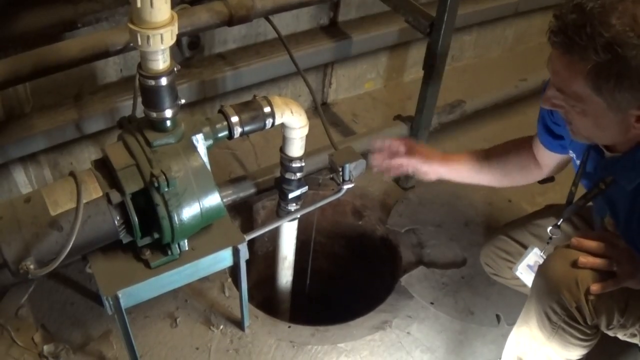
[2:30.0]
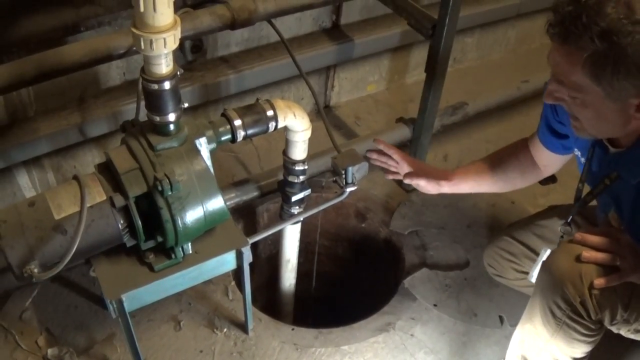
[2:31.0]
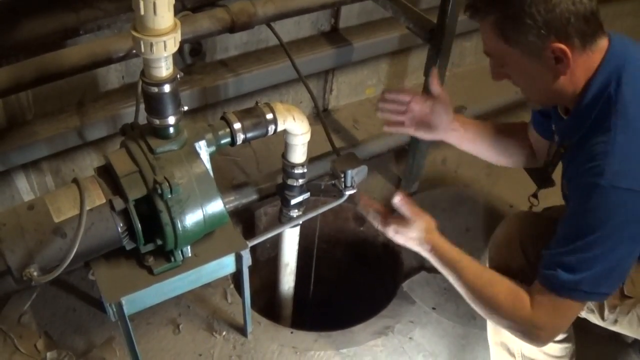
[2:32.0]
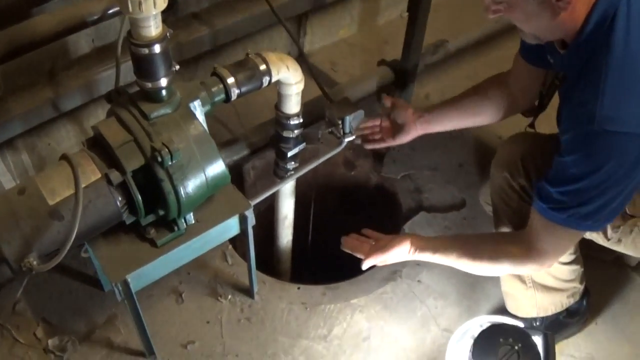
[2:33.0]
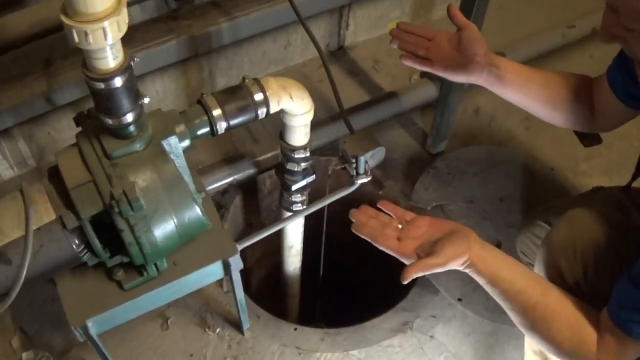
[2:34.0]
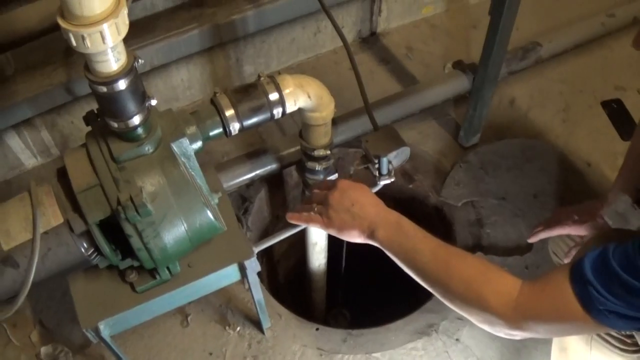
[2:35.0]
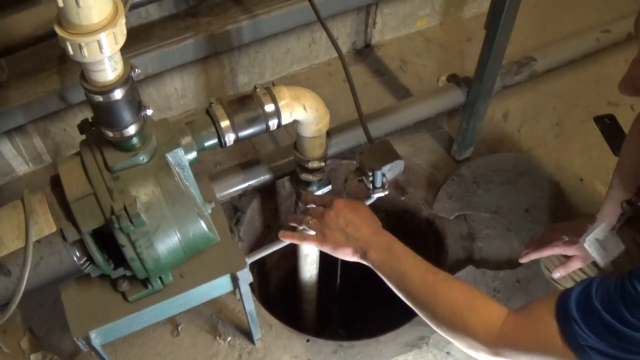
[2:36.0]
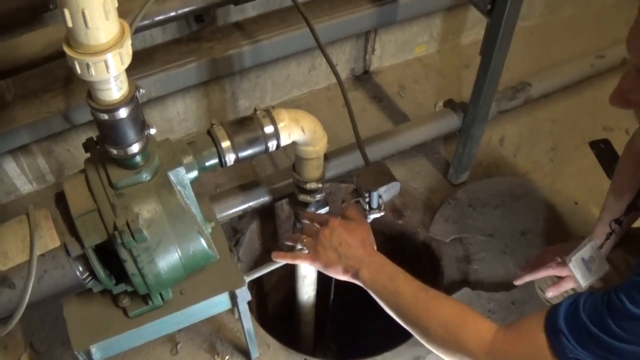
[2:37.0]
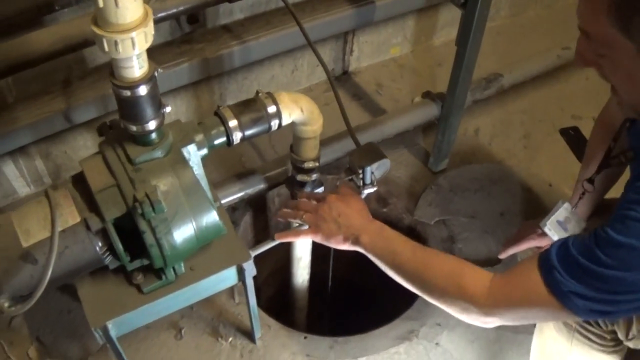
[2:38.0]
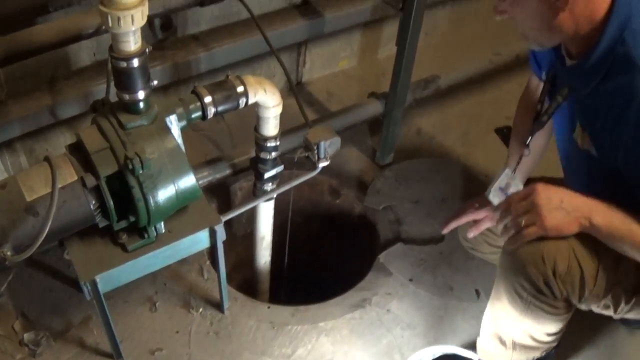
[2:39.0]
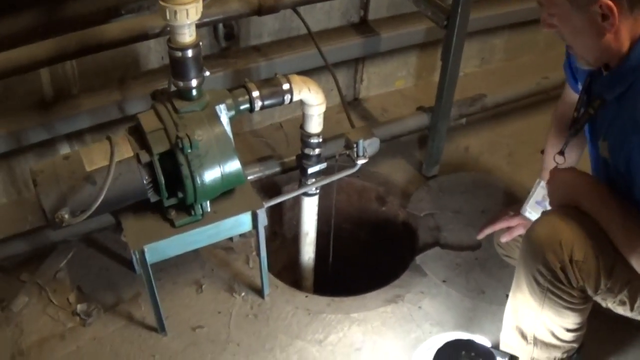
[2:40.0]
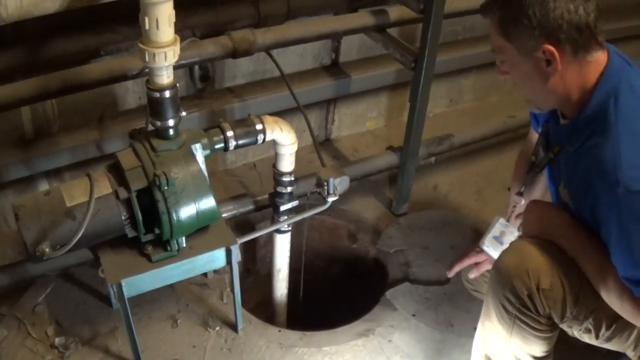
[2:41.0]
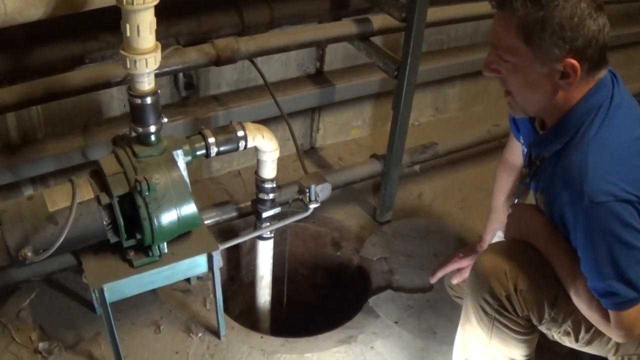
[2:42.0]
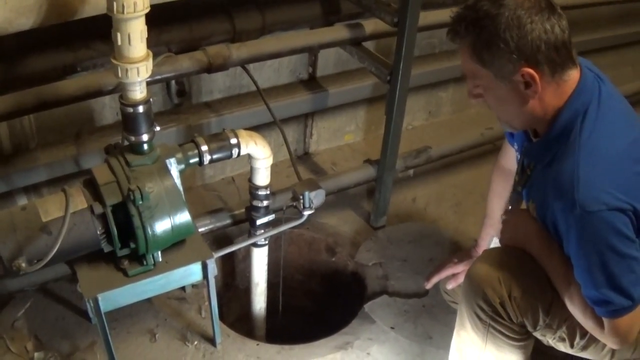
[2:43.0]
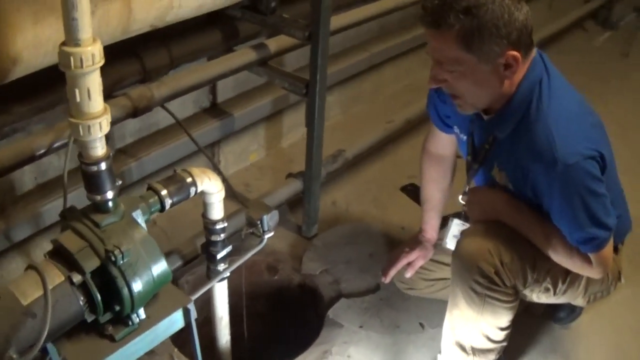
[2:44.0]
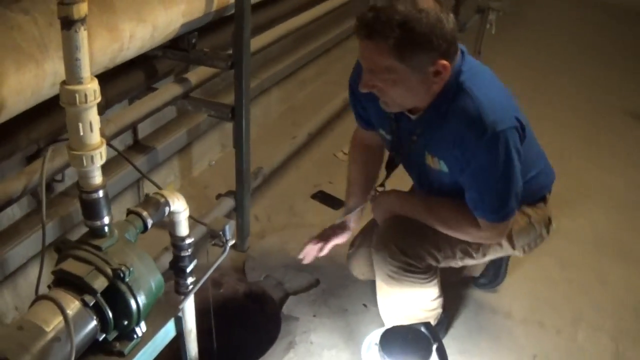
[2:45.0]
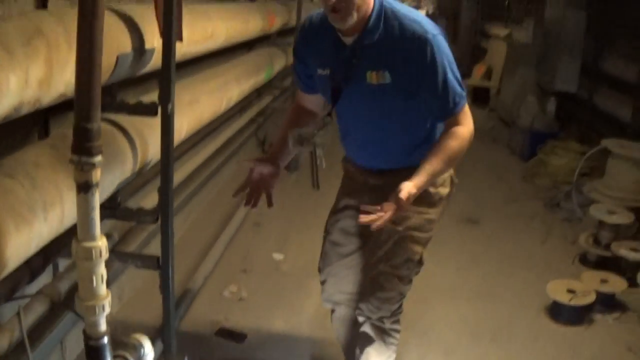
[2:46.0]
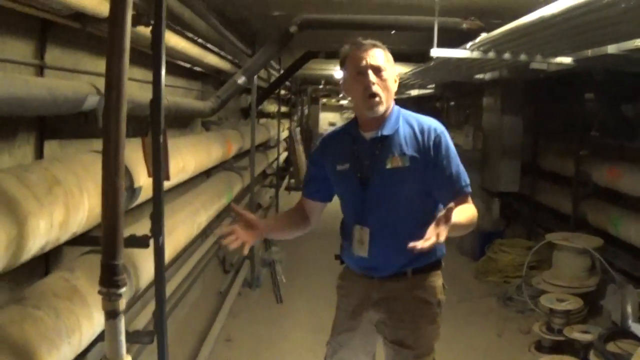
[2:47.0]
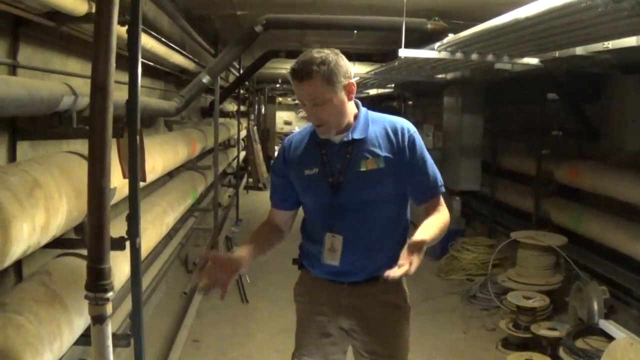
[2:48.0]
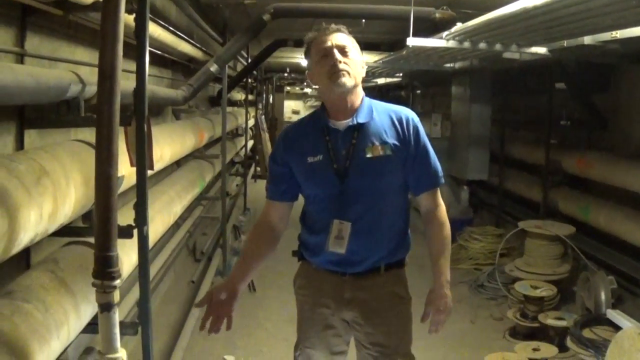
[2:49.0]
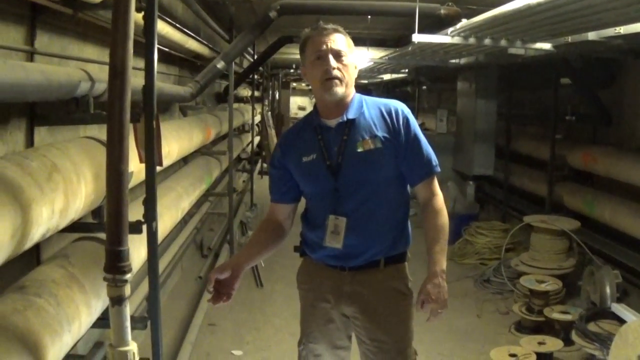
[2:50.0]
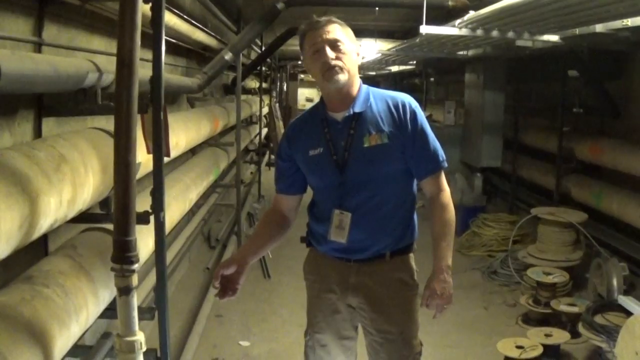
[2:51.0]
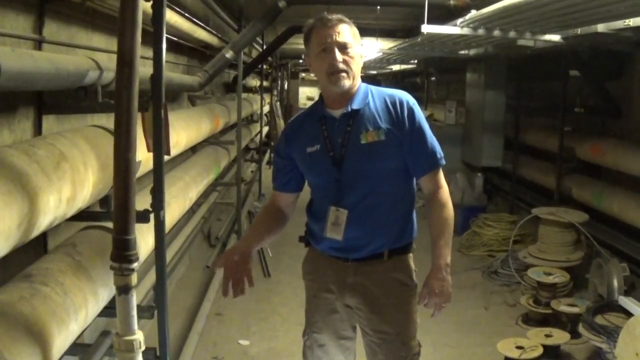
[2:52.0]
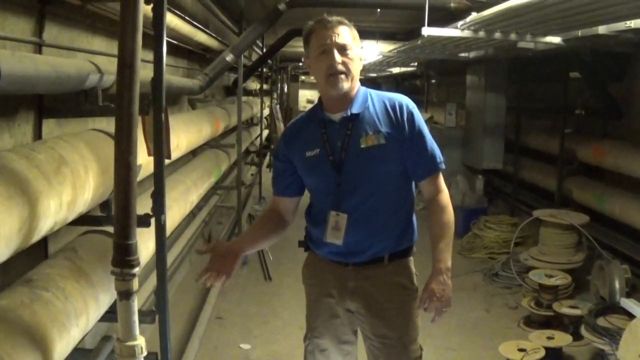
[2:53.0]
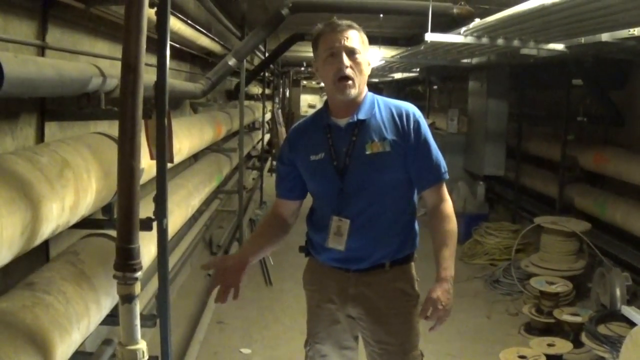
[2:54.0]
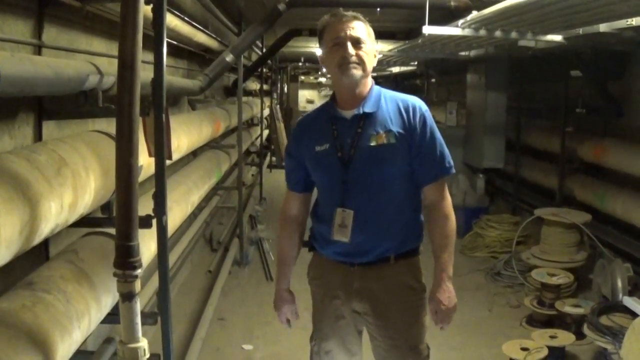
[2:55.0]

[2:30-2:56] The man still wears the blue t-shirt and cargo pants. The hole, the pipe, the black connectors and the pump are visible; the device is presumably a pump rather than a motor, made of a green material with a silver-like material at the front. The man explains, pointing both hands down to the well, the cylindrical hole, then bringing them up to touch the black connector, still squatting. He looks at the camera, stands up, looks at the camera again and at the hole, then tries to explain something while pointing at the hole with one hand. Finally he nods his head, as if signaling that it is okay now.